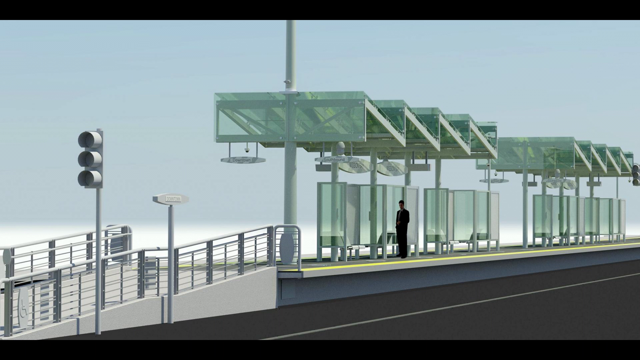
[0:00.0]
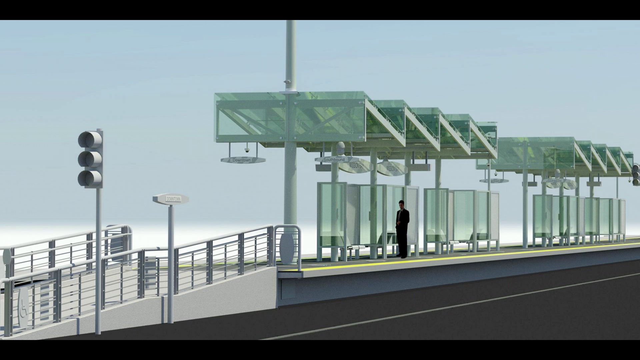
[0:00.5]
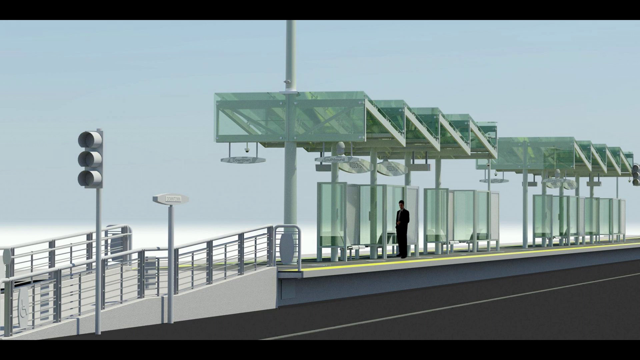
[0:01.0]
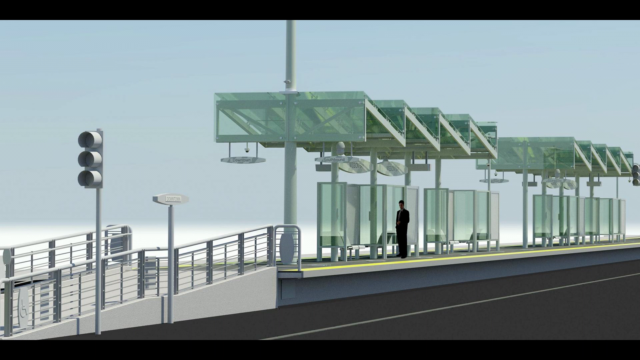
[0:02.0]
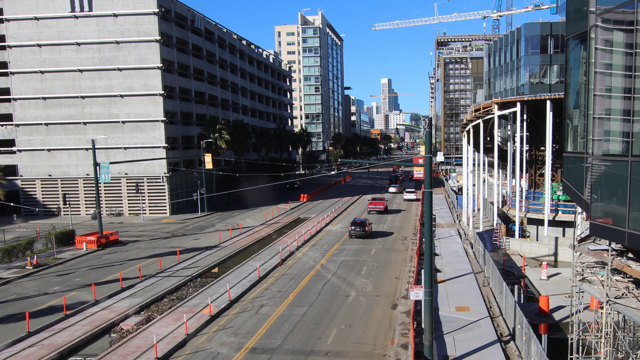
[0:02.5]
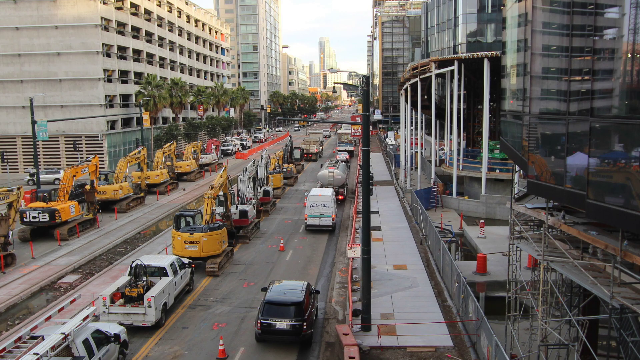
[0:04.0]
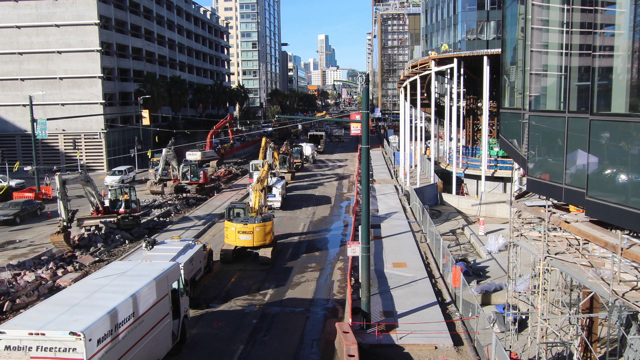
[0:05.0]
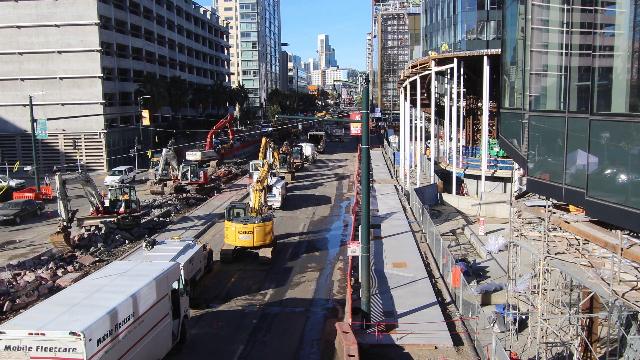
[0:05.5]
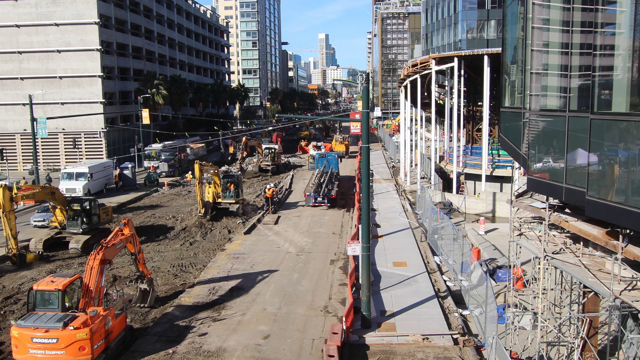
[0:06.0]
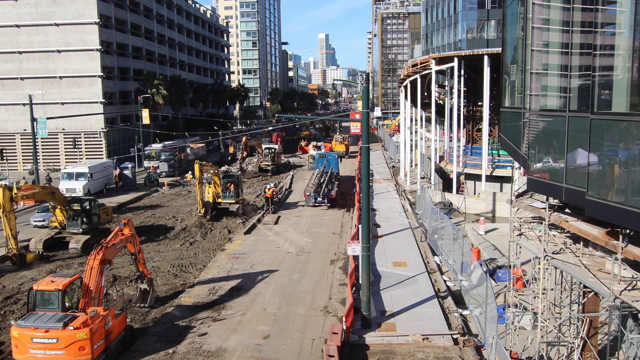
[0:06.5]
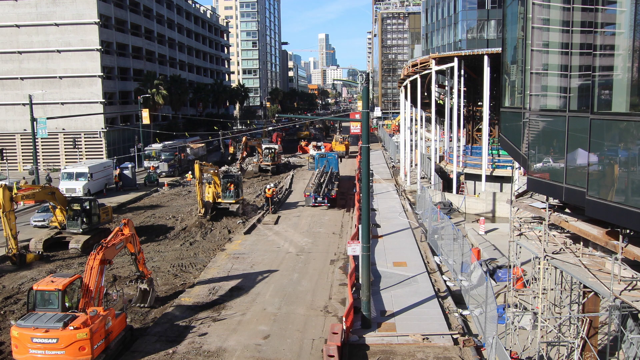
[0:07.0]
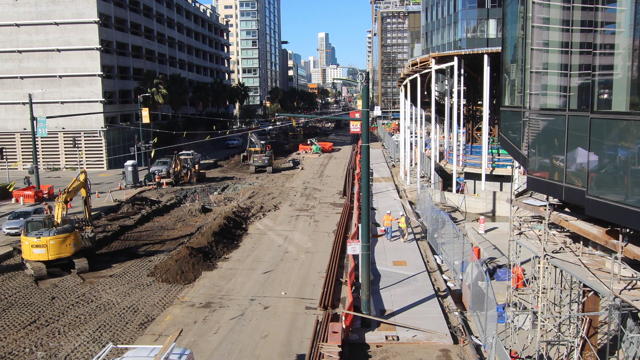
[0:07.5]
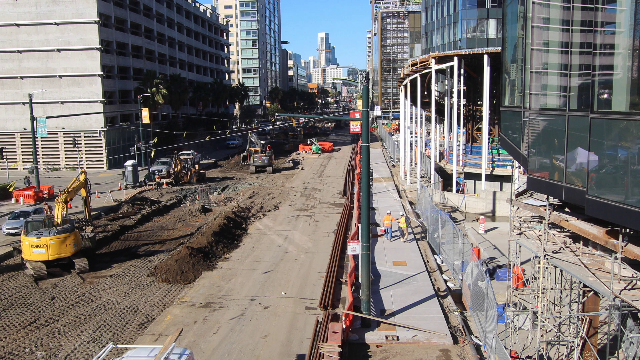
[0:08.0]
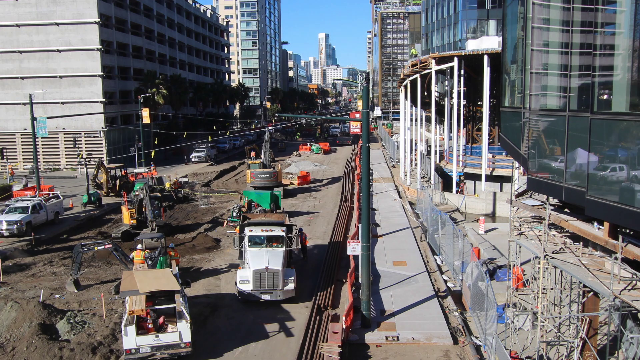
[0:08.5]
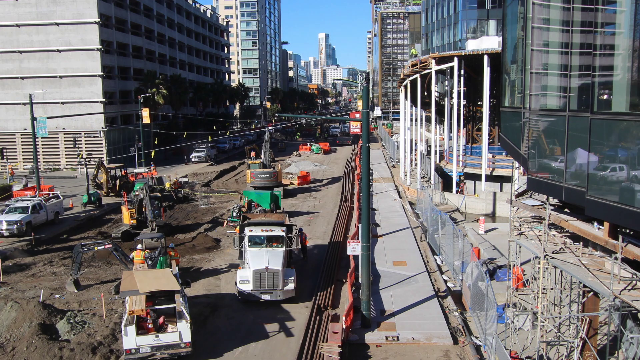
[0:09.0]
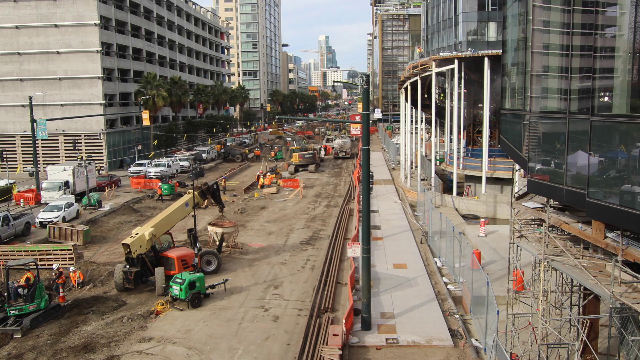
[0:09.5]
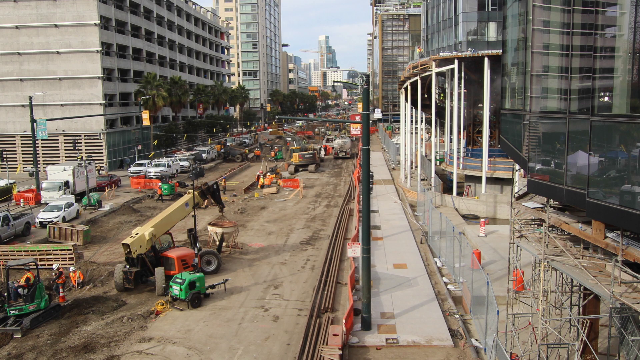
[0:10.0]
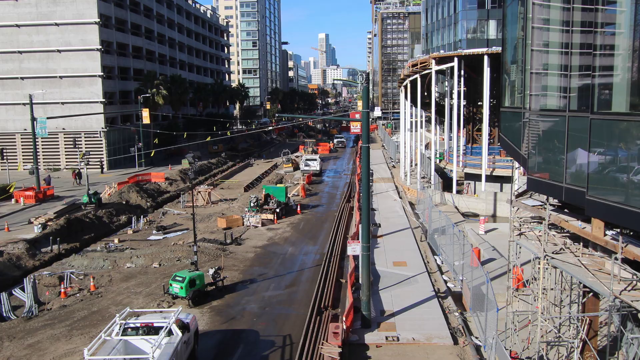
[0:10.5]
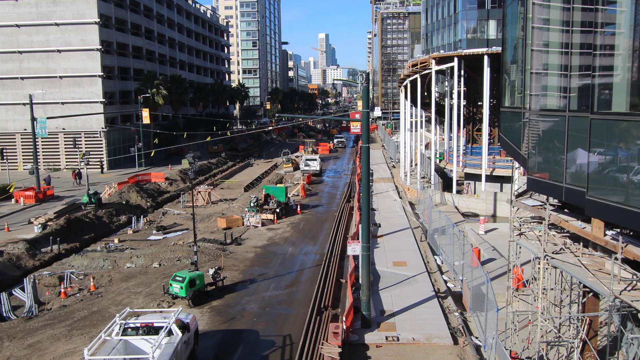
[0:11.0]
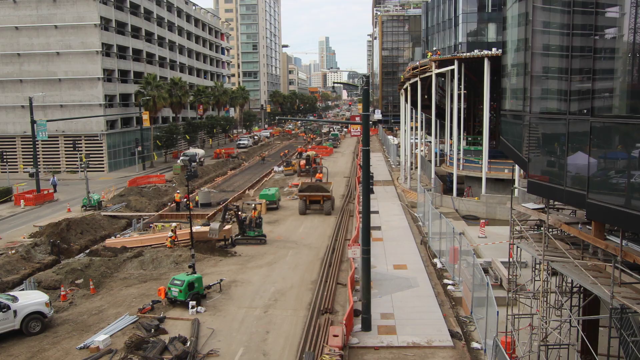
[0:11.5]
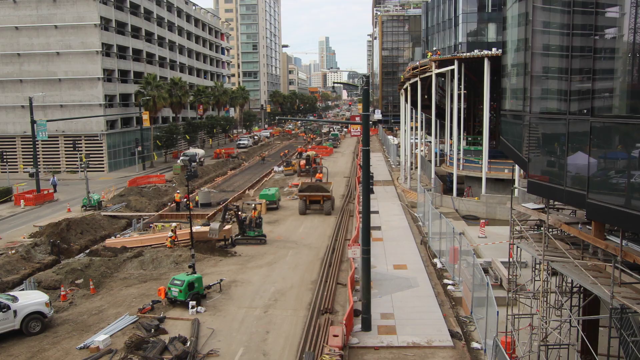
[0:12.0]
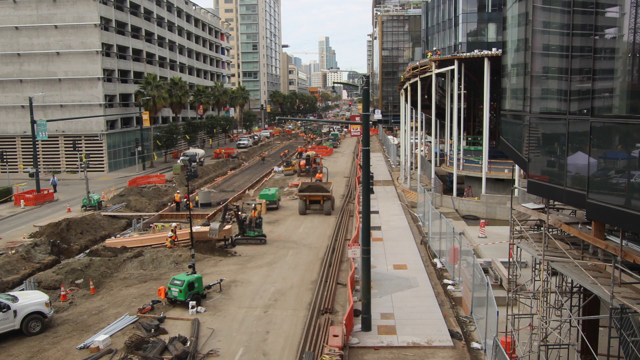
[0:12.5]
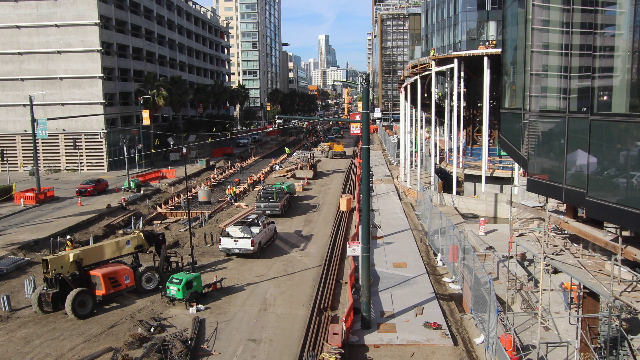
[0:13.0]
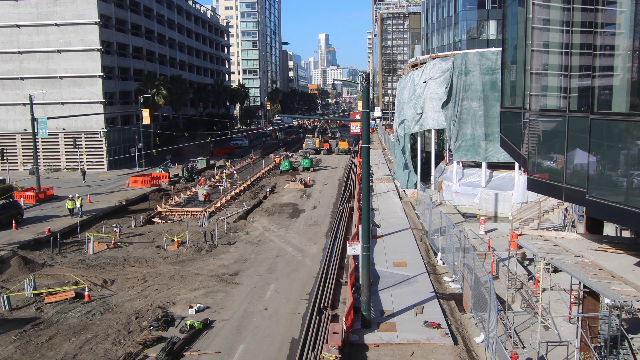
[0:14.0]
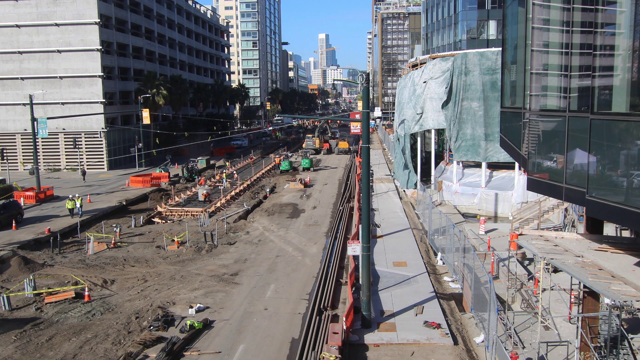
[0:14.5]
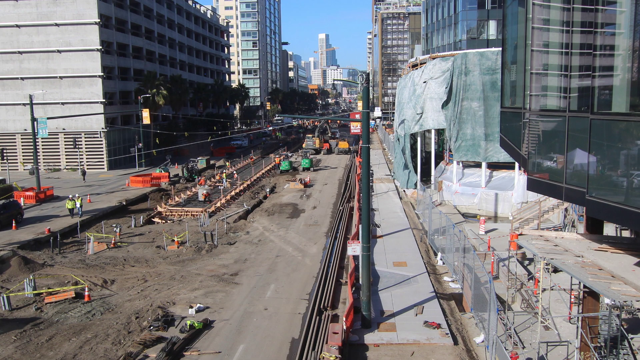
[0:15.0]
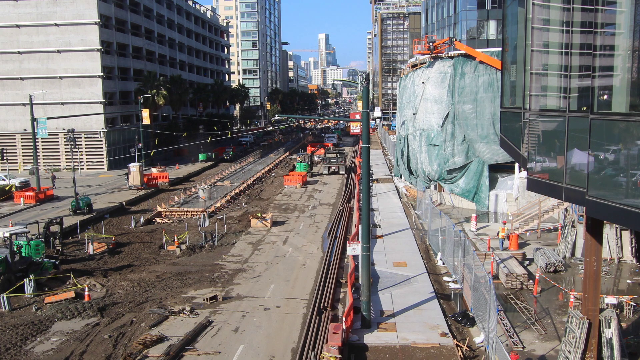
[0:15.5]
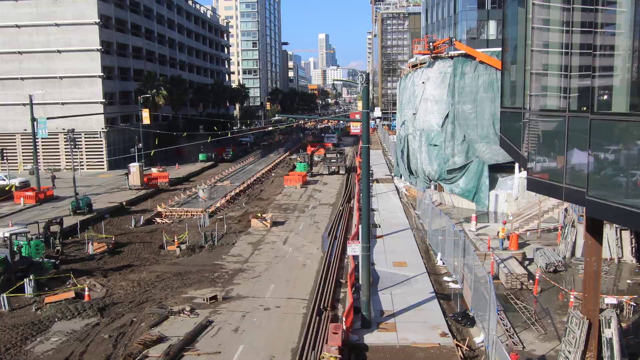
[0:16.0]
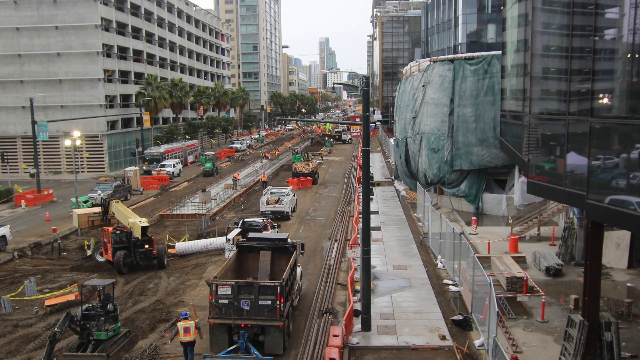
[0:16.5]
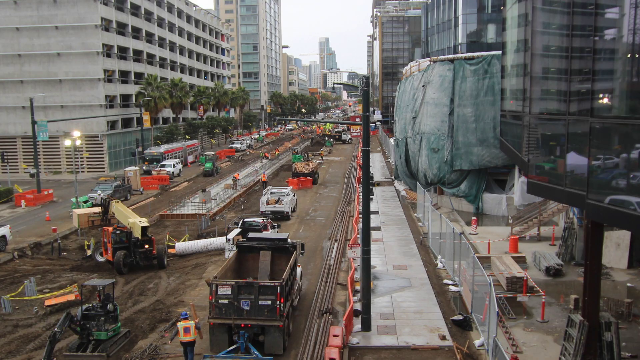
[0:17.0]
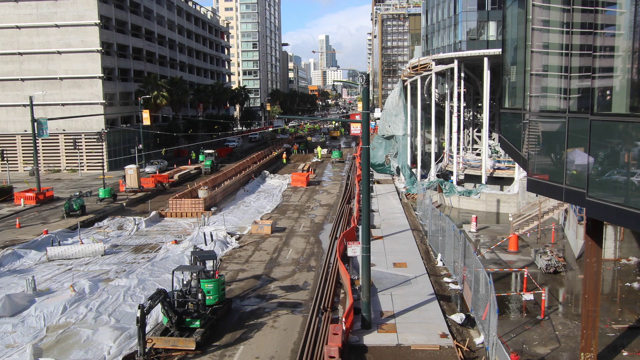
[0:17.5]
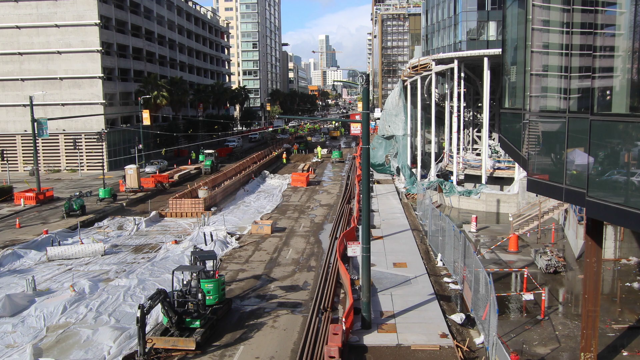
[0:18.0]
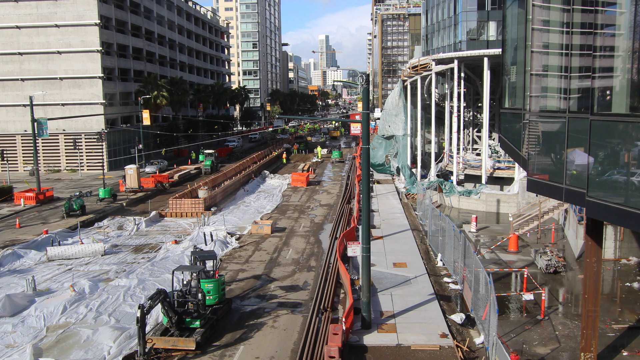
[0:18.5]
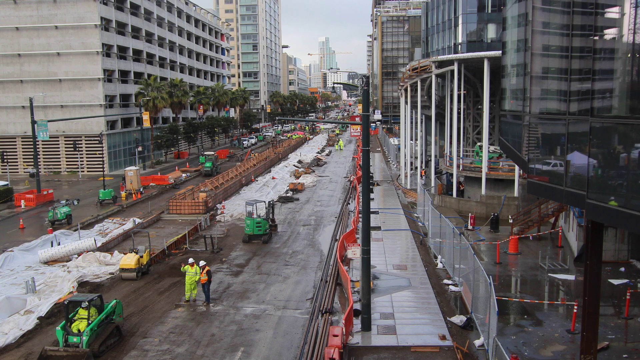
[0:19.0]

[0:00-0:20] Still photos show various stages of construction. One appears to show a modern train station, but outside there are a number of cranes lined up on a road, and they look to be building a train or tram line along it. The shots seem to follow the construction as it develops. One shows the road all dug up with various machinery on it; in another the road is still quite dug up, with two pieces of machinery that have been used to dig it up, one of them yellow and near the front of the camera. The time-lapse-like sequence continues with different machinery and different stages of development of the road, including cement being laid. There are sheets and tarpaulins on buildings on the right-hand side of the road, possibly to protect them from the construction, and tall buildings on the left-hand side of the road, including one grey building. Various workers can be seen standing still in the photos.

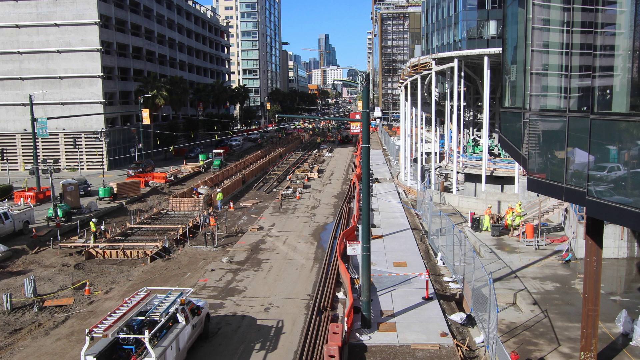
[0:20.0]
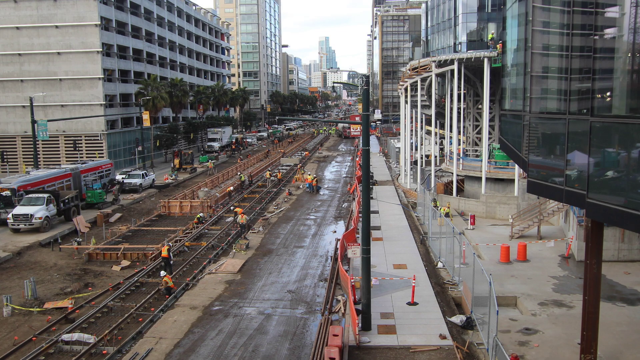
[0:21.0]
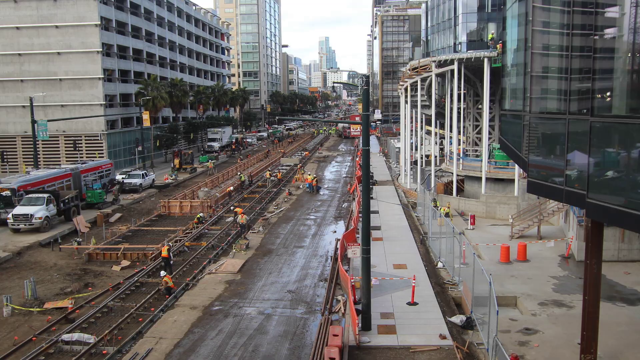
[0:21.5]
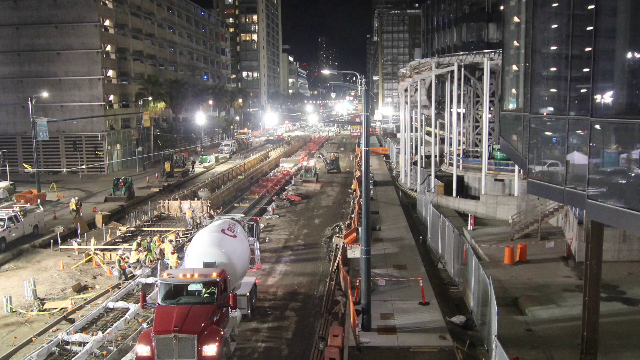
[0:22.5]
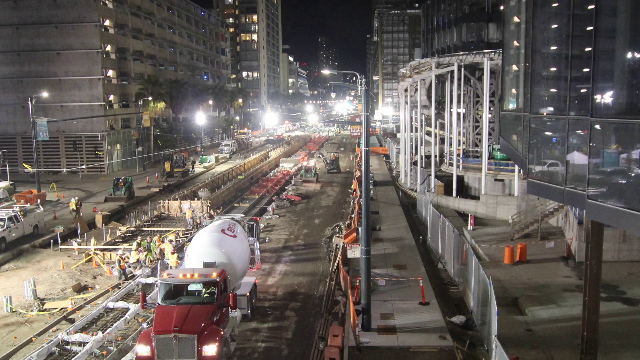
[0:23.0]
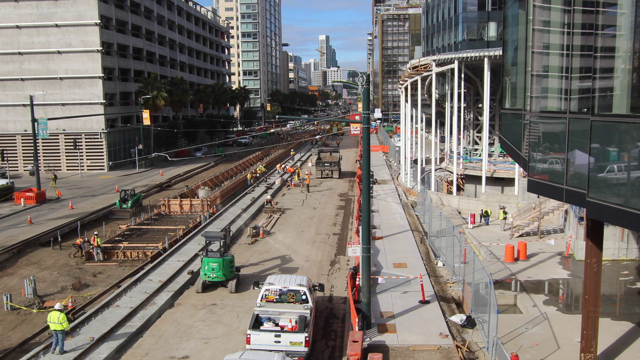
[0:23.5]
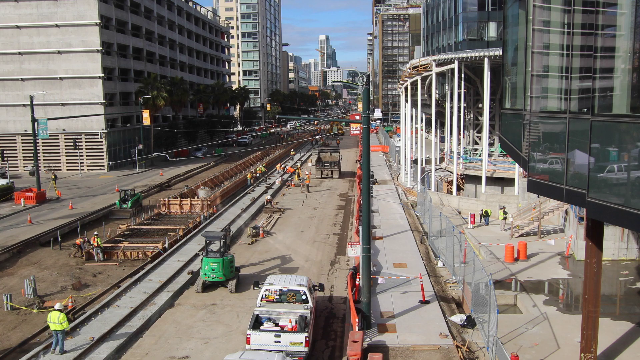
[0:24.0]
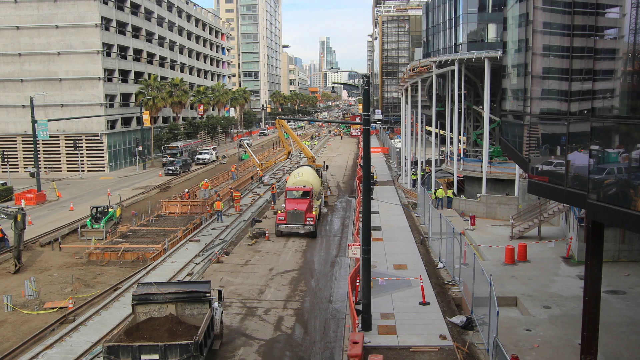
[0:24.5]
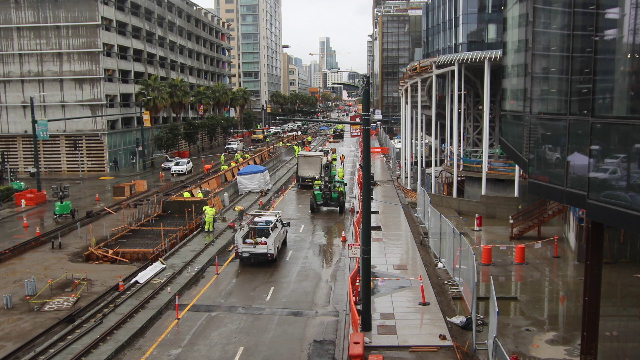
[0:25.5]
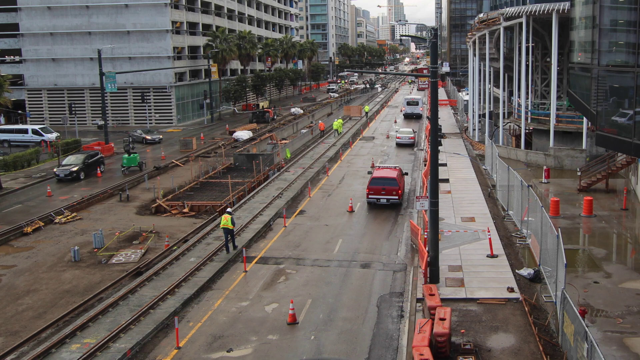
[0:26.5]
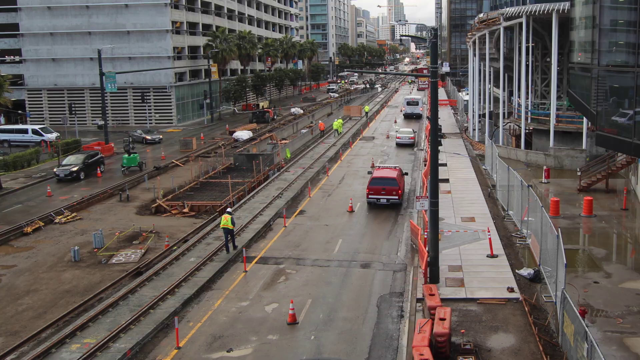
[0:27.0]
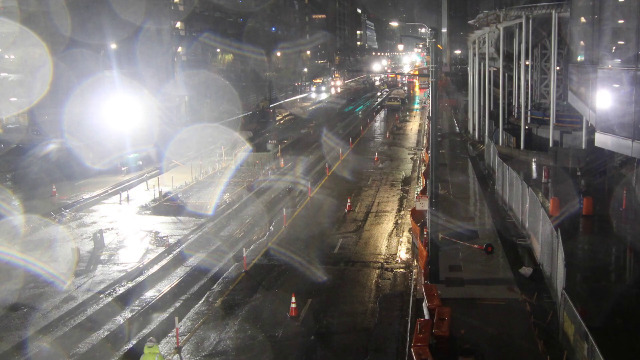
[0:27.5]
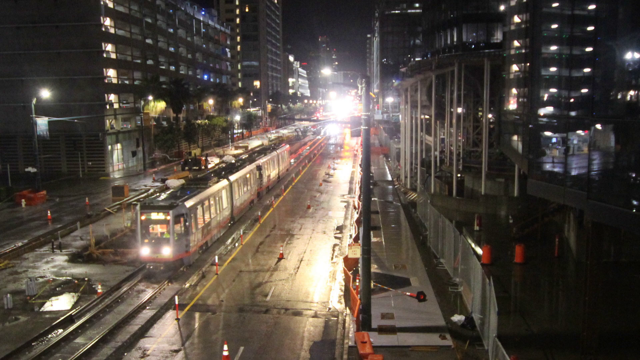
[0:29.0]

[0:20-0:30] Still photos show the construction of a train or tram line down a long road in the middle of a city, each at a different level of development. One is at night: the street lights are on, the streets are all lit up, a cement truck appears to be right in front of the camera, and the lights of the nearby buildings are on. In daytime, the train or tram line is starting to take shape, though to the left of it there appears to be some cement the workers are working on, so the construction is not quite complete. The ground is covered in rain, but the construction continues. The workers typically wear yellow jackets and white helmets. At night, a train or tram arrives with its lights on, though there still seem to be some sort of barriers indicating the construction isn't complete.